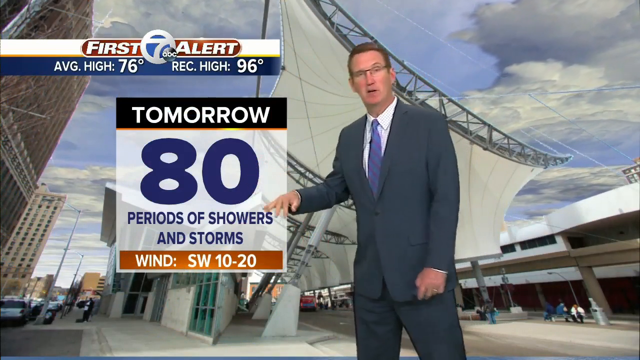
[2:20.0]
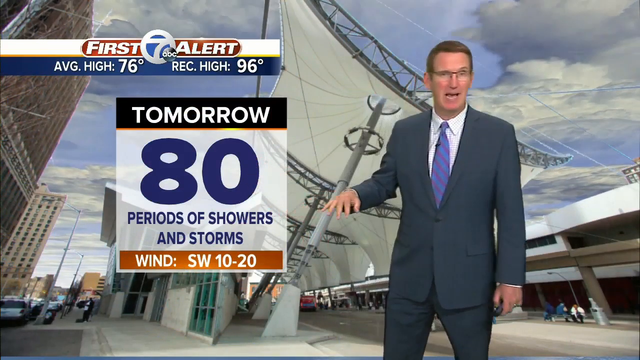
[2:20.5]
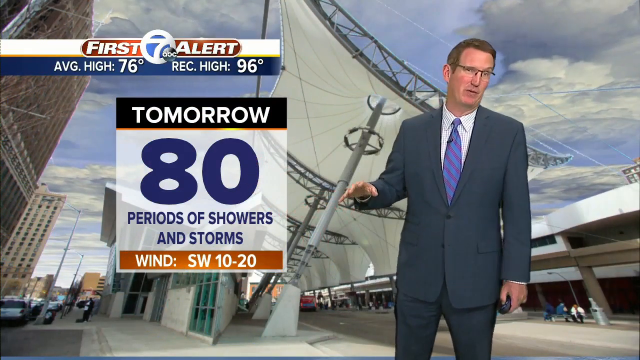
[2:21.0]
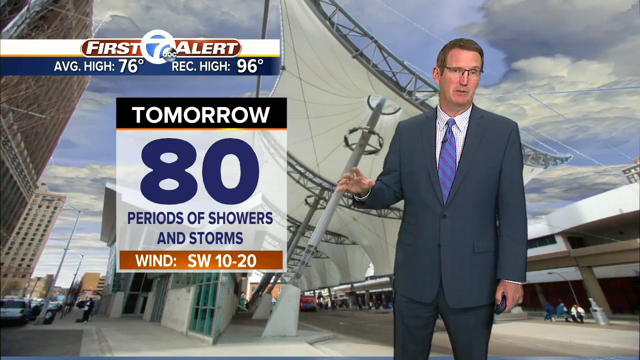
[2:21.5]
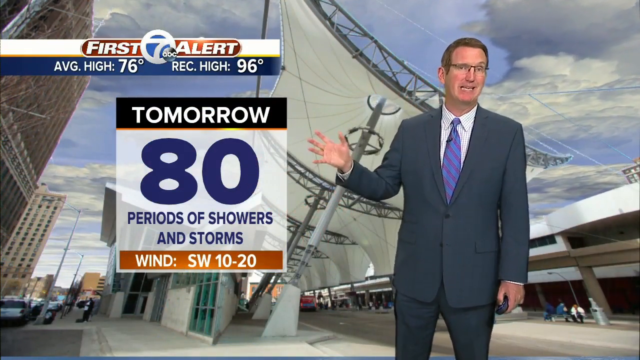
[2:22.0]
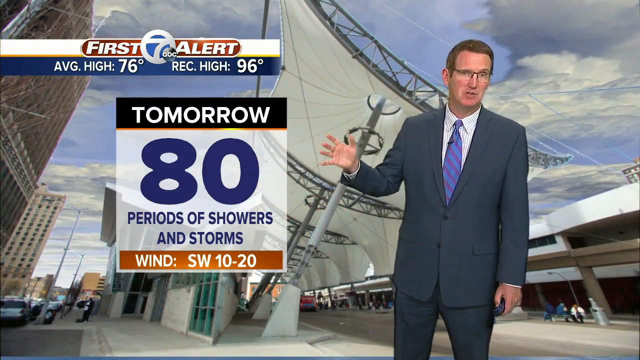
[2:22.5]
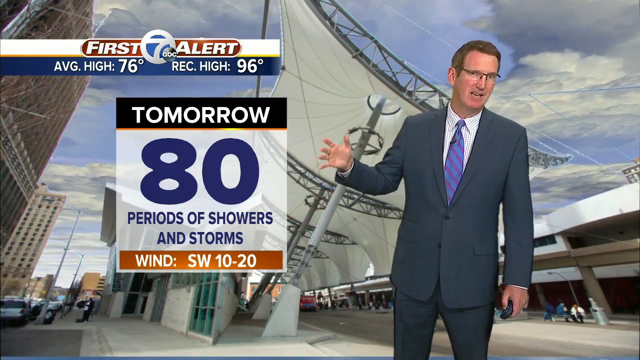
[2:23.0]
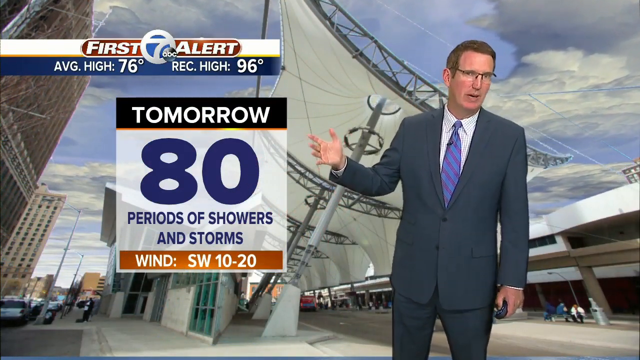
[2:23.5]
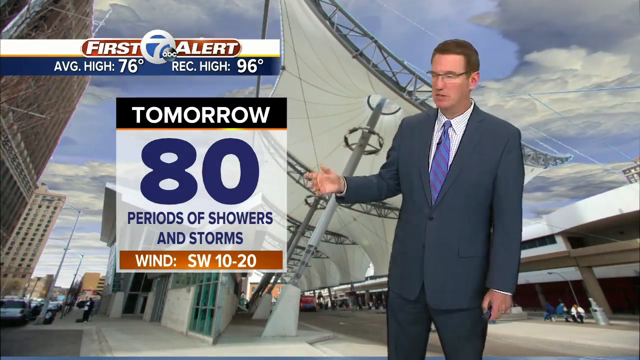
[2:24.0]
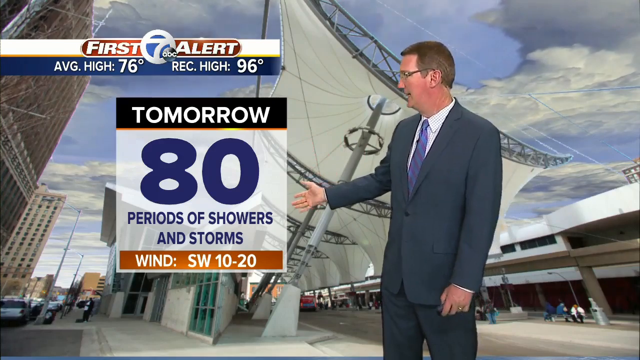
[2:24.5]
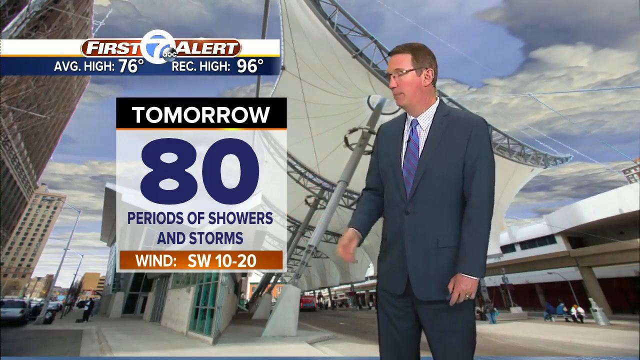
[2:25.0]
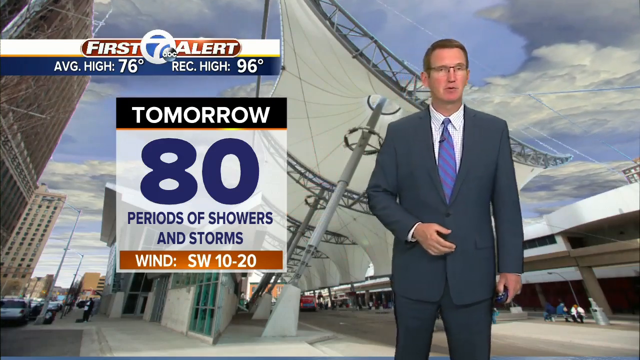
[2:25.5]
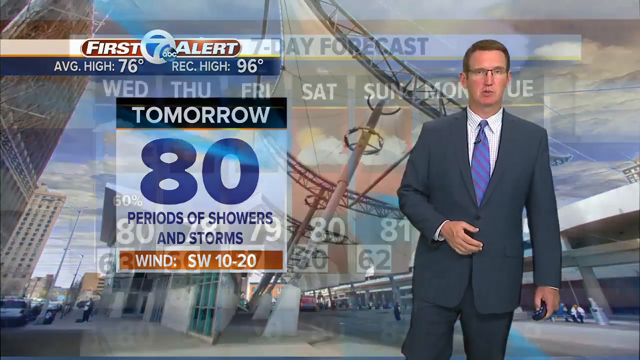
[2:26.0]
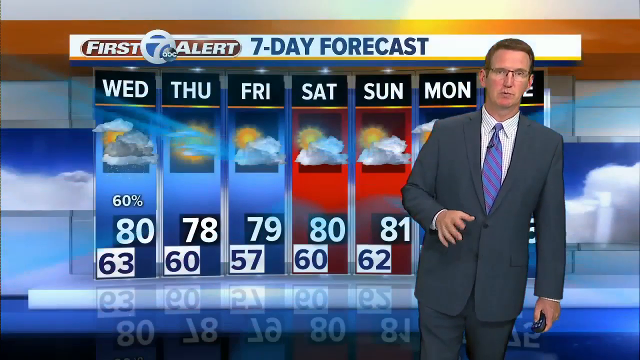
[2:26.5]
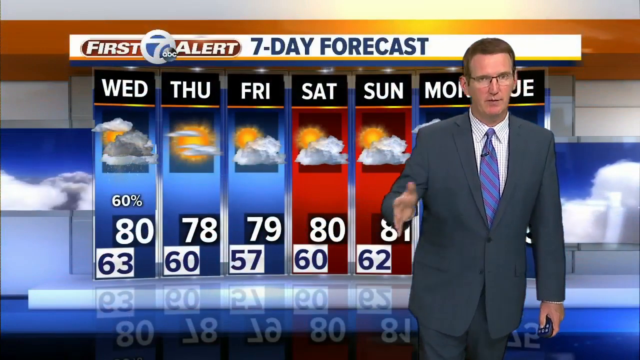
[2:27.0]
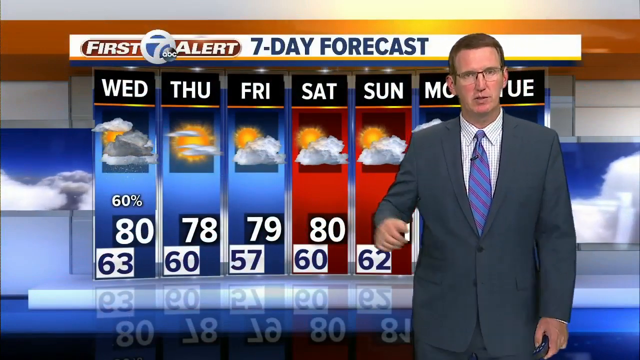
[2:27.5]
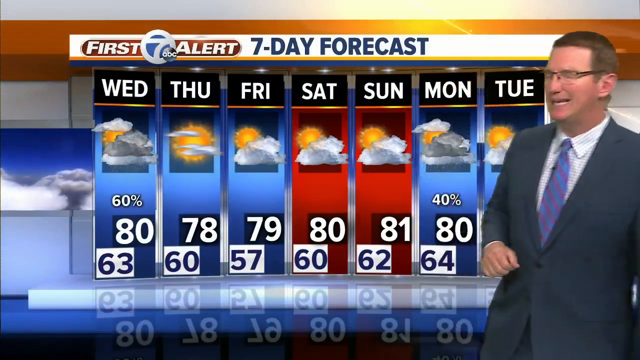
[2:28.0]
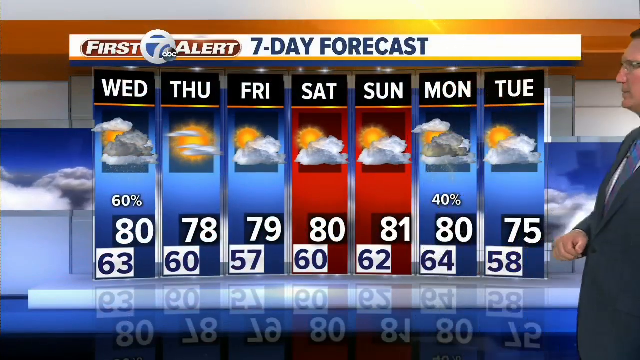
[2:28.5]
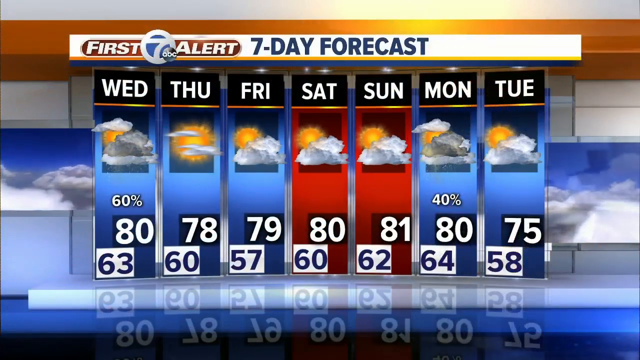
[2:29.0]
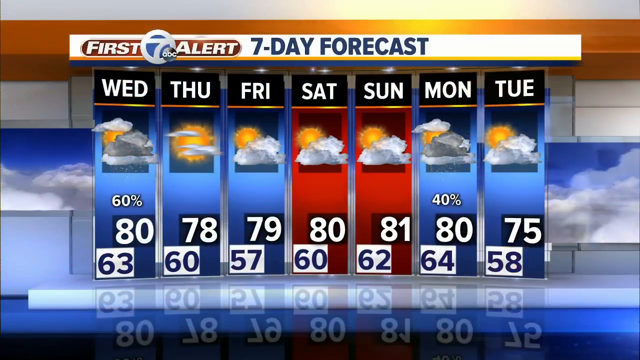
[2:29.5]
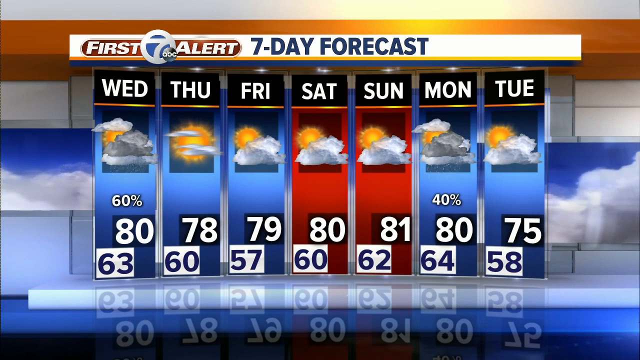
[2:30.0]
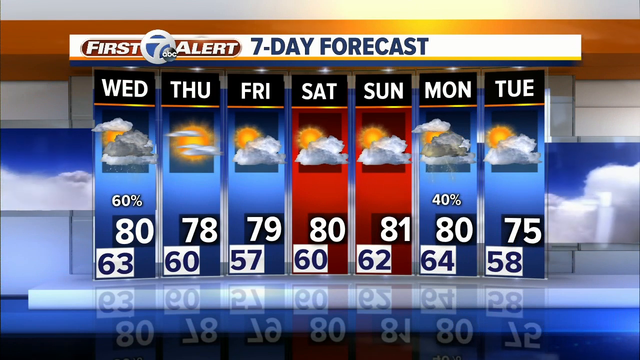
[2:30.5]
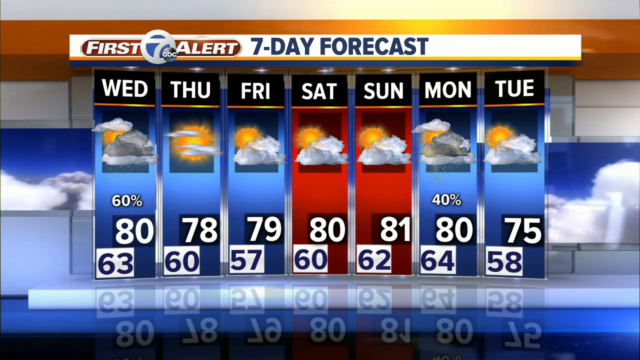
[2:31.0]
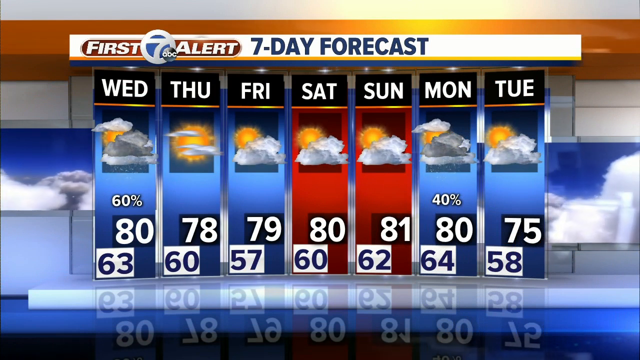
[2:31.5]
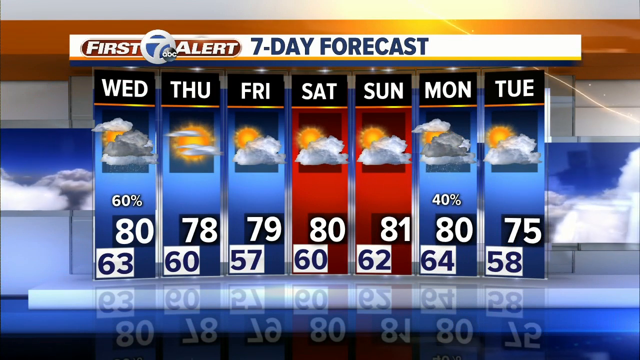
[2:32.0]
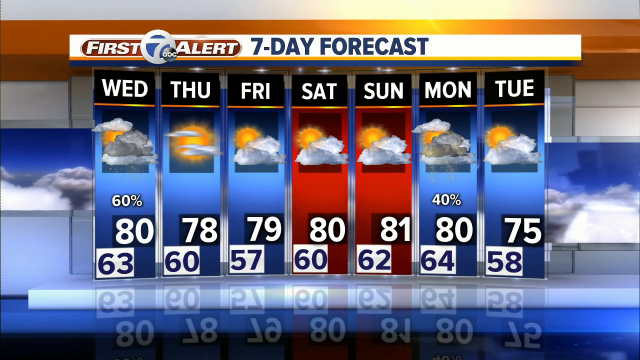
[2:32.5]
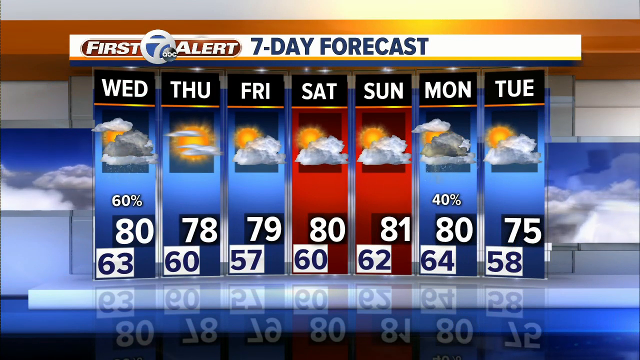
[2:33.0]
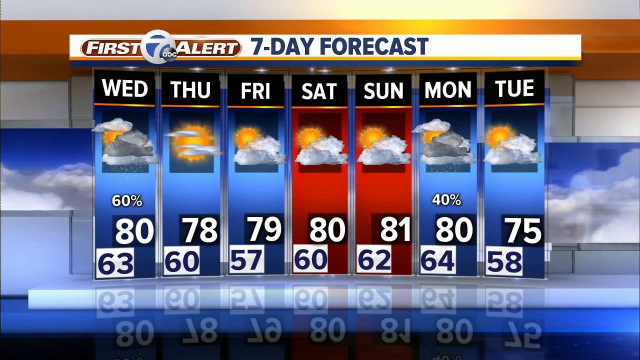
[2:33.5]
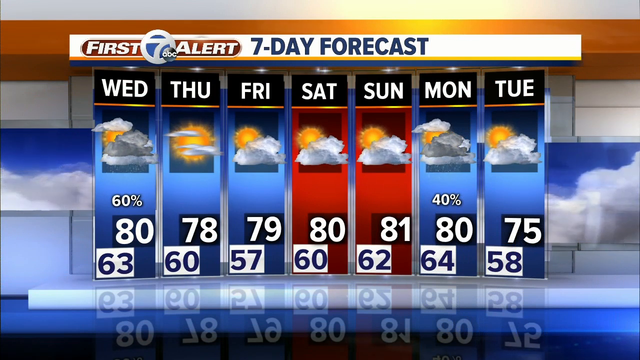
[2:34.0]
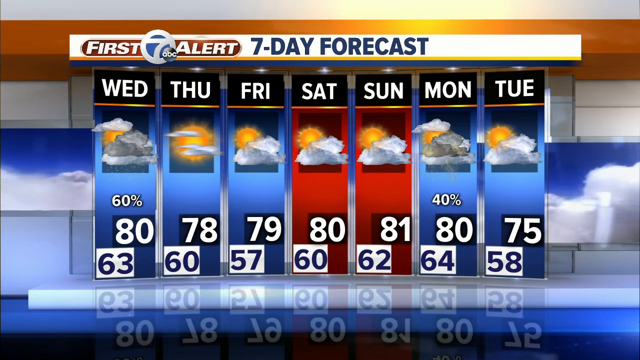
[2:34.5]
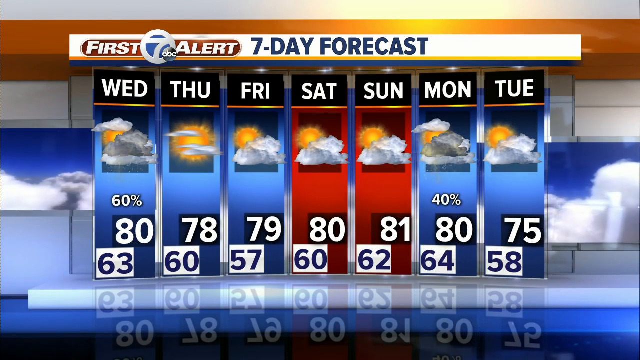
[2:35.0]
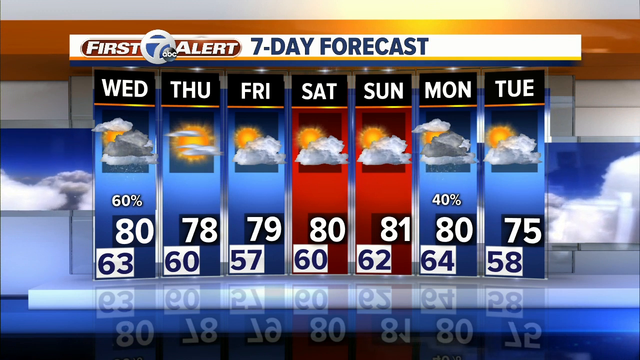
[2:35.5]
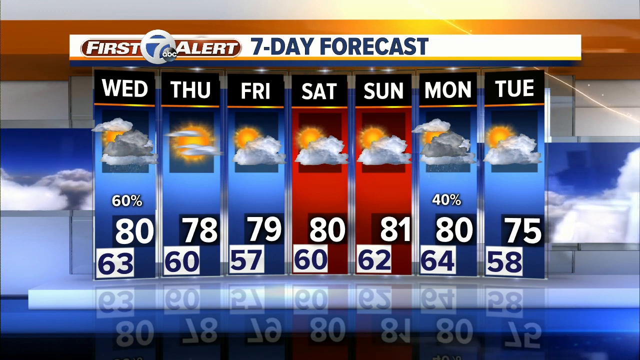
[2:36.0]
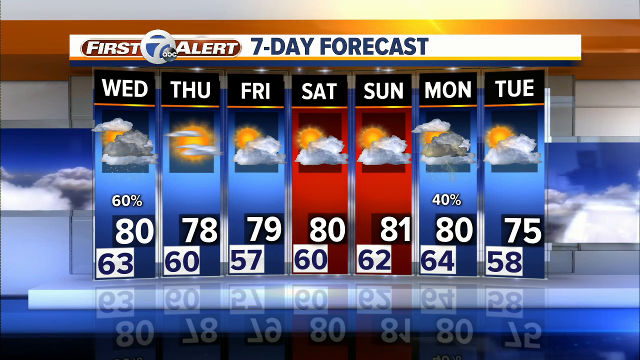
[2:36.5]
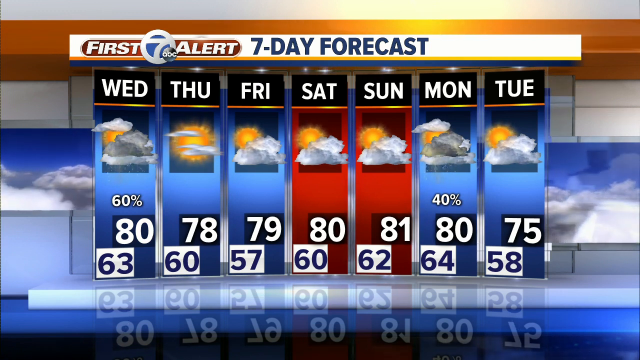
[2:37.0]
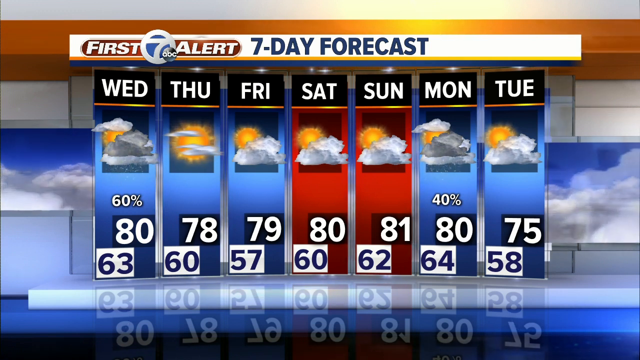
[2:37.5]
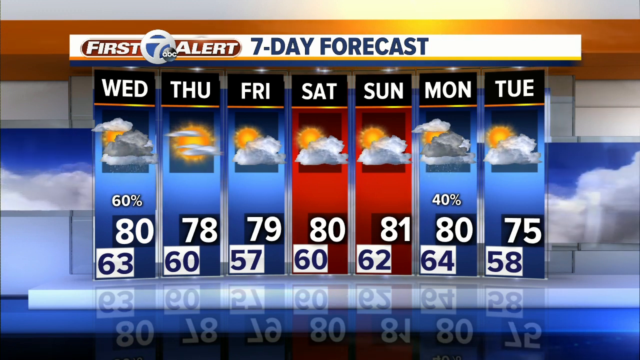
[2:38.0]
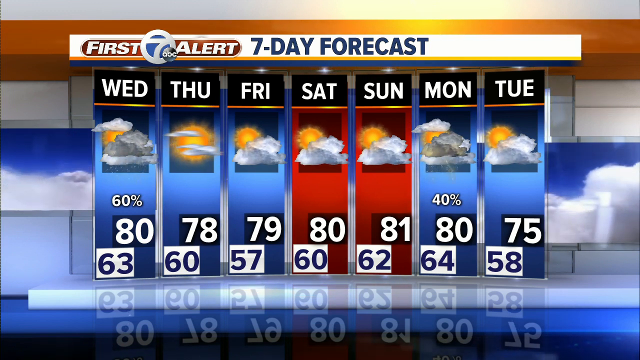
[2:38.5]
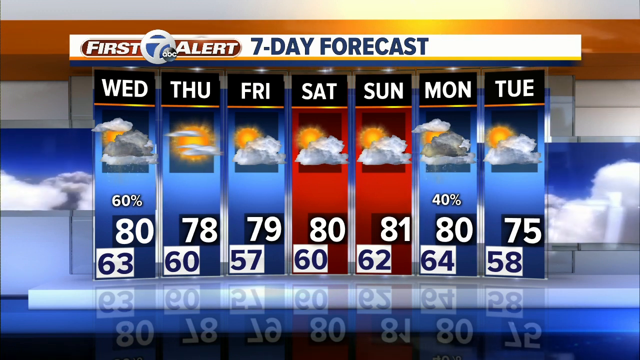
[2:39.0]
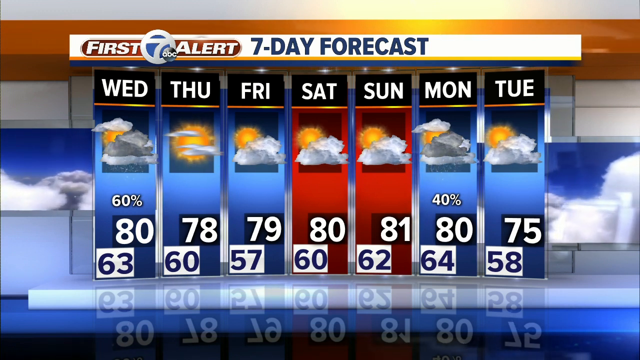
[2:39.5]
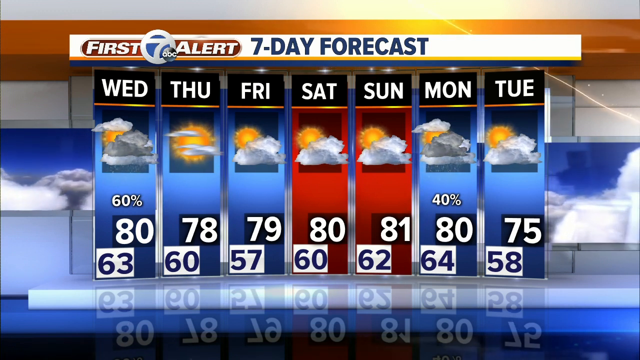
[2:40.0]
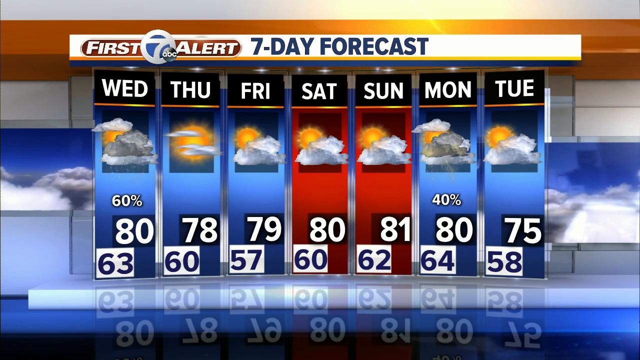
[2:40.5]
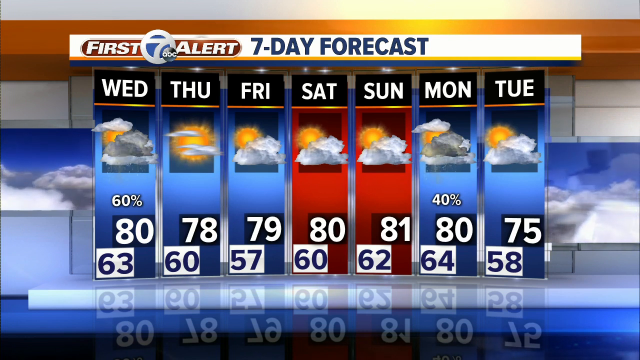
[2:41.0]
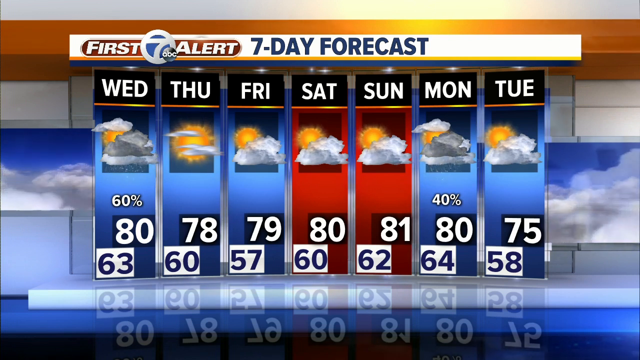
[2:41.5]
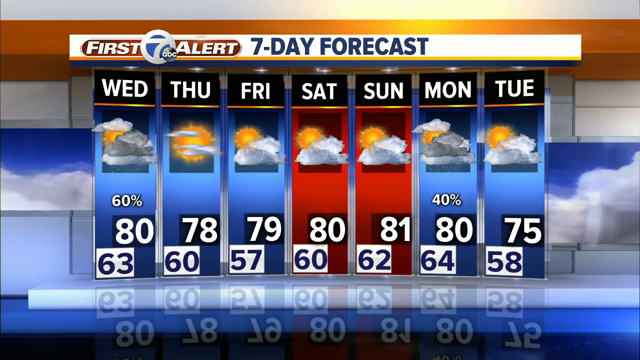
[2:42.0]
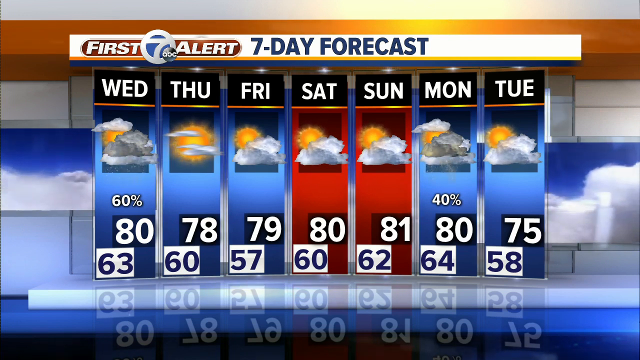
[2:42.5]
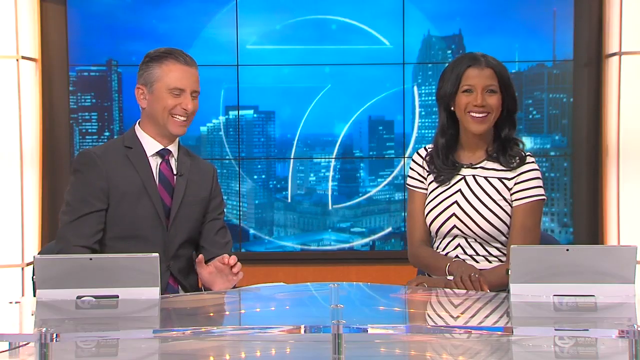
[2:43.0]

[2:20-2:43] The forecast shows wind southwest 10 to 20, an average high of 76 degrees and a record high of 96 degrees, and the weather seems to be clearing up. A seven-day forecast follows: Wednesday with a 60 percent chance of rain, Thursday no rain at 78 and 60, Friday 79 and 57, Saturday 80 and 60, Sunday with 62, Monday a 40 percent chance at 80 and 64, and Tuesday 75 and 58. Some thunder alerts are shown, with less favorable conditions especially for Wednesday and Tuesday. A man in a blue suit demonstrates the different weather conditions.